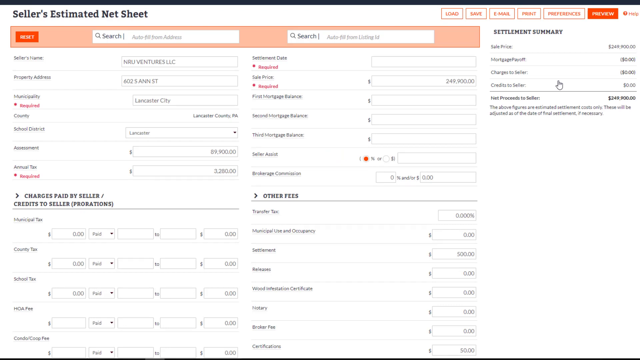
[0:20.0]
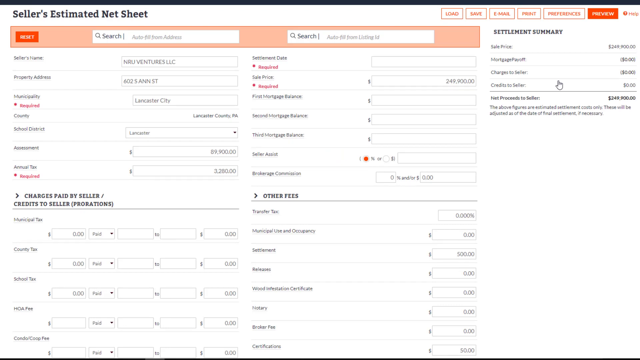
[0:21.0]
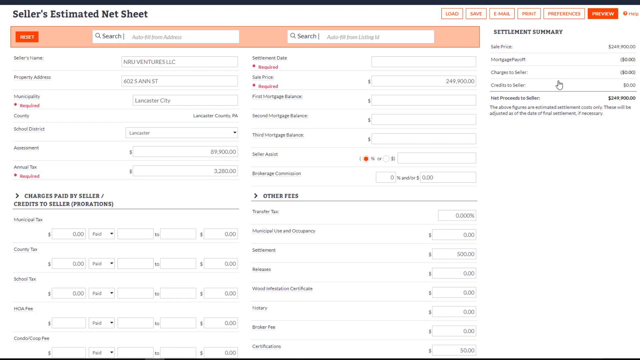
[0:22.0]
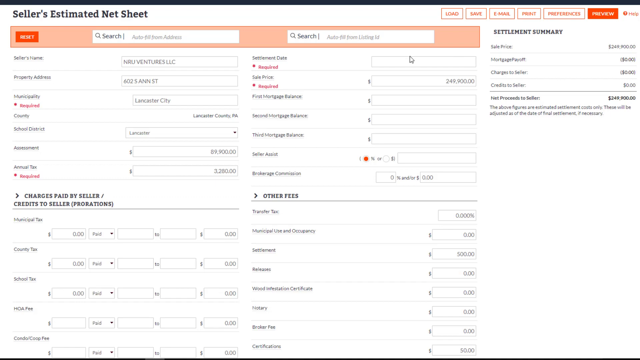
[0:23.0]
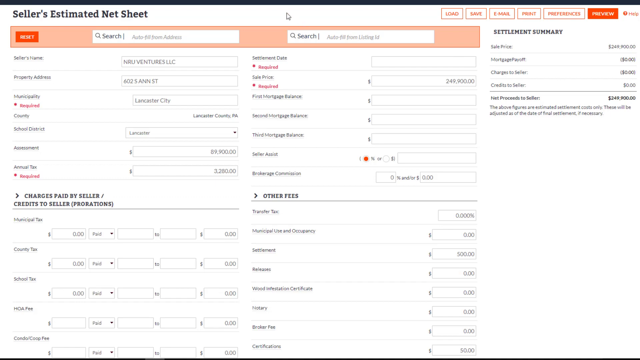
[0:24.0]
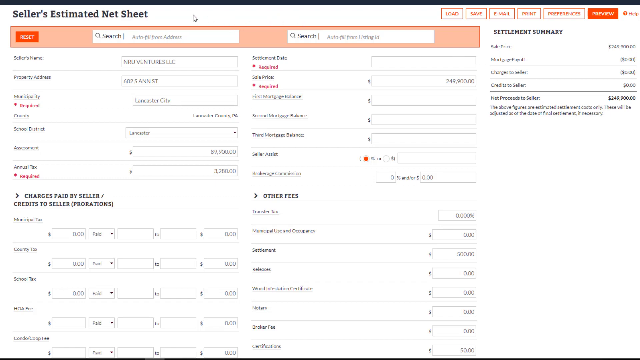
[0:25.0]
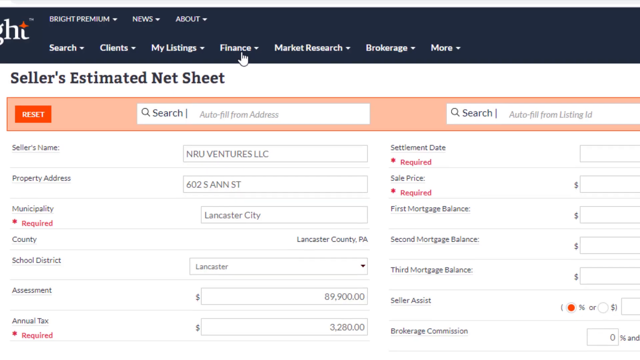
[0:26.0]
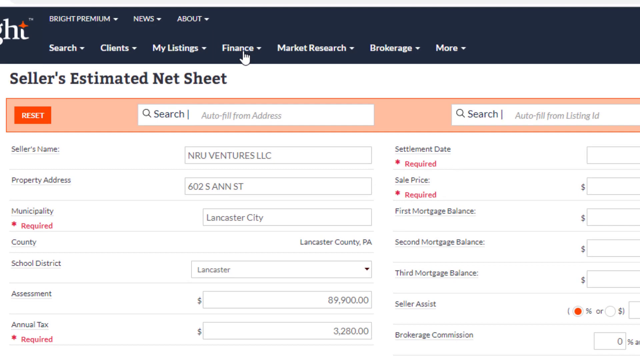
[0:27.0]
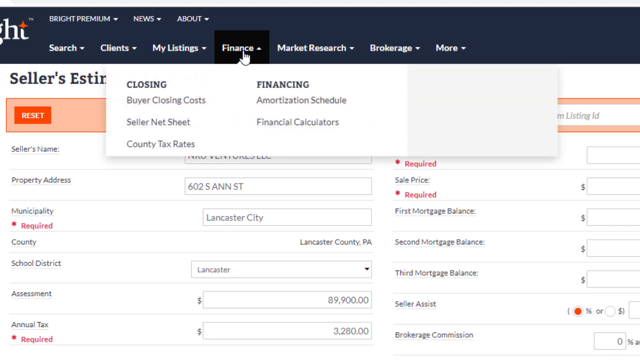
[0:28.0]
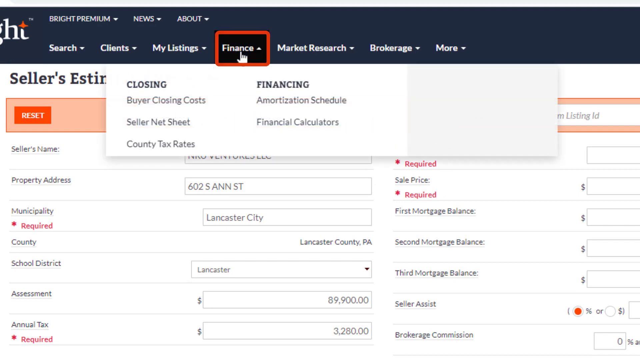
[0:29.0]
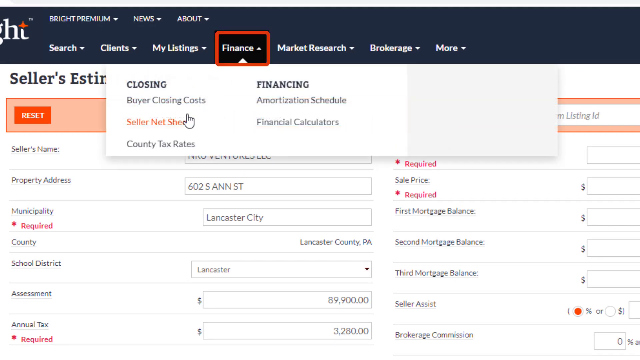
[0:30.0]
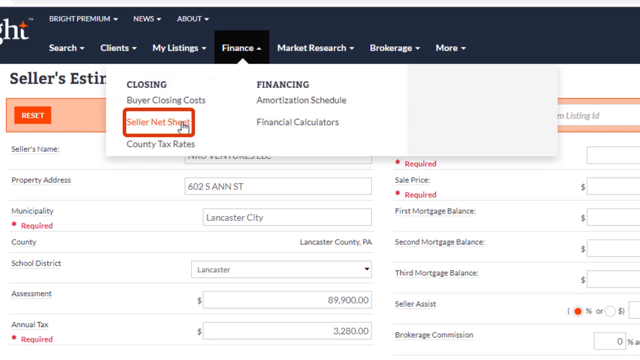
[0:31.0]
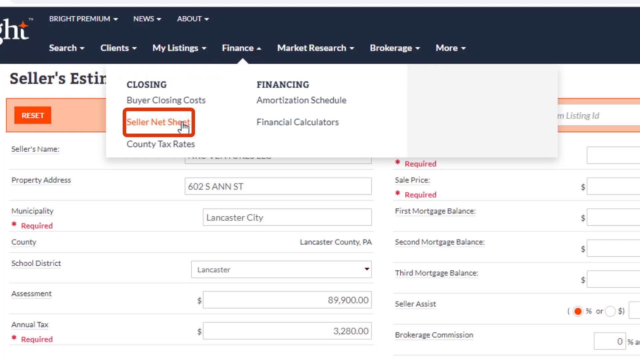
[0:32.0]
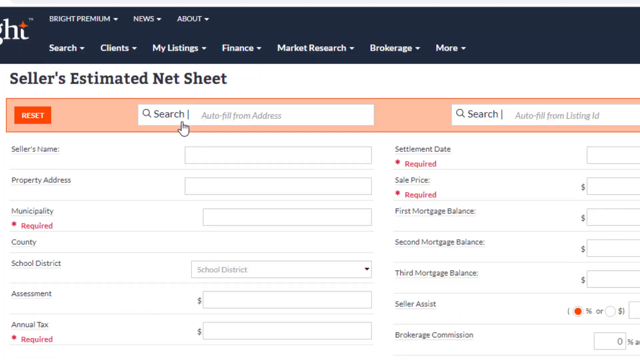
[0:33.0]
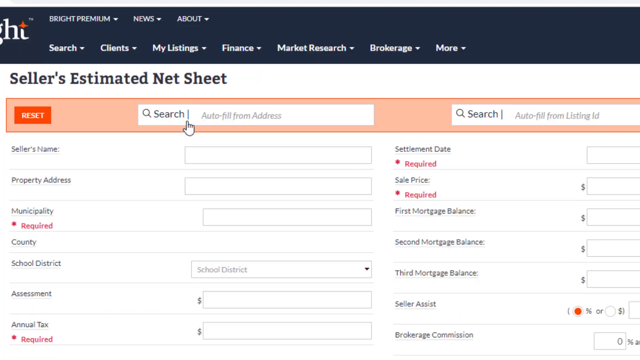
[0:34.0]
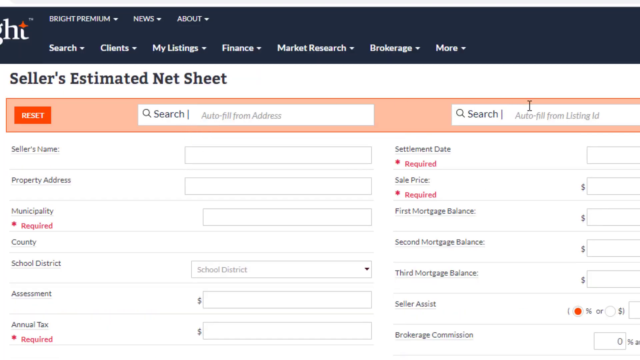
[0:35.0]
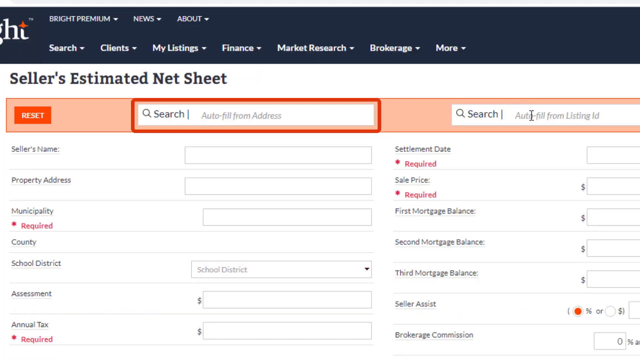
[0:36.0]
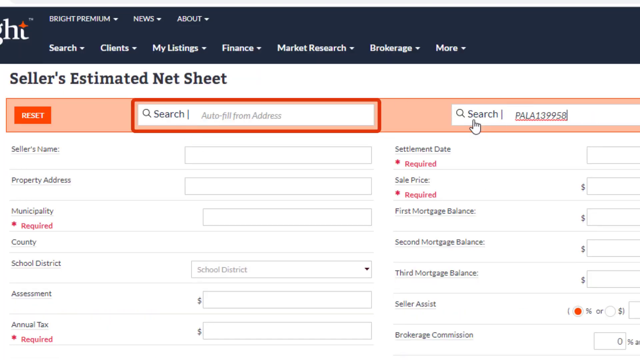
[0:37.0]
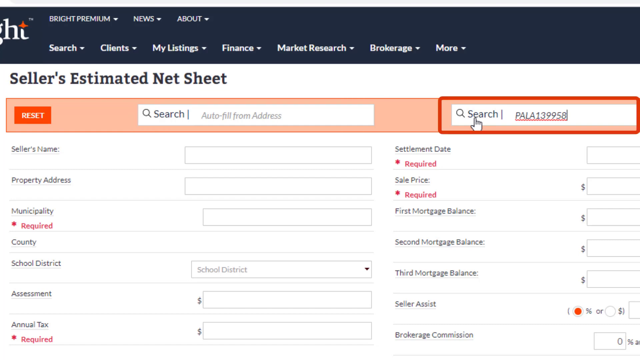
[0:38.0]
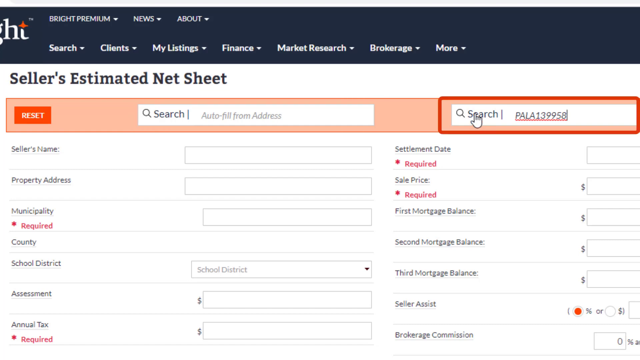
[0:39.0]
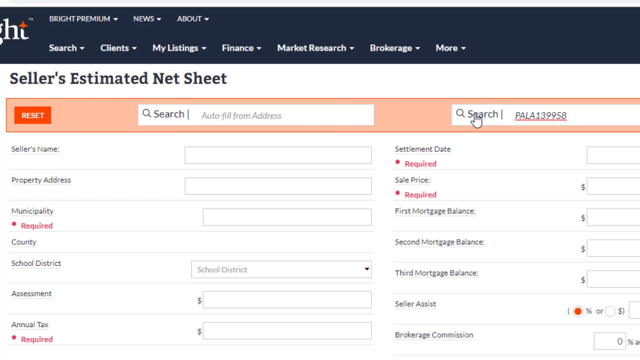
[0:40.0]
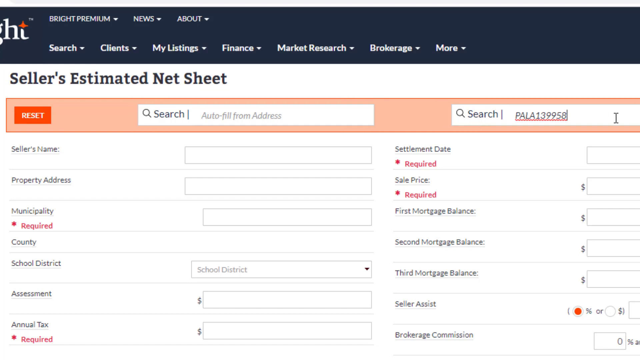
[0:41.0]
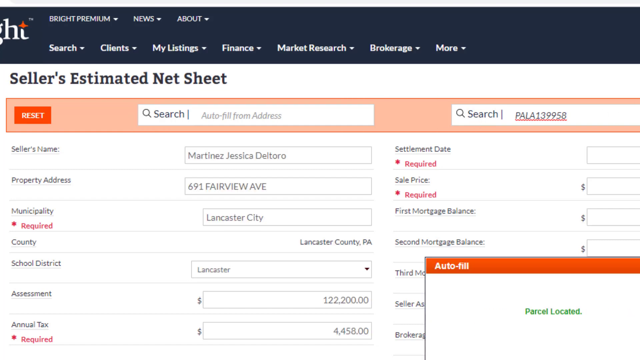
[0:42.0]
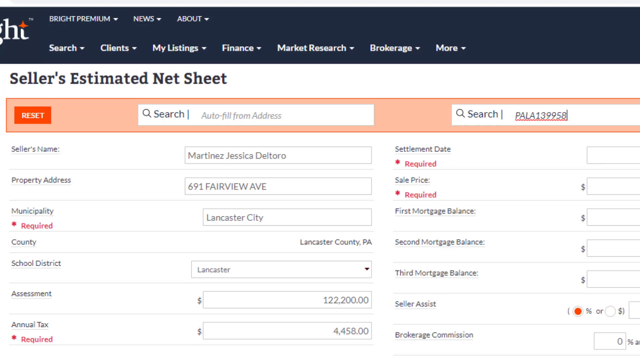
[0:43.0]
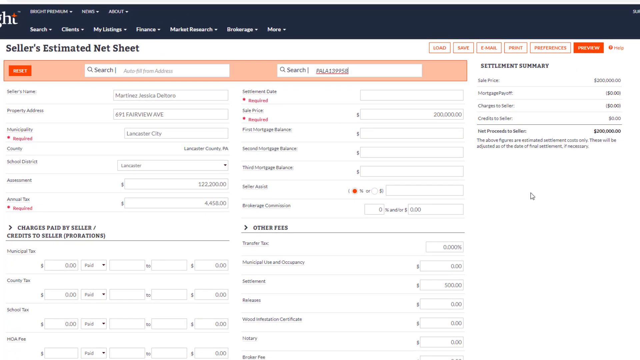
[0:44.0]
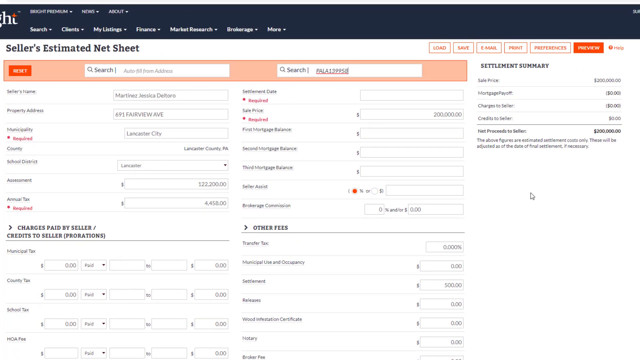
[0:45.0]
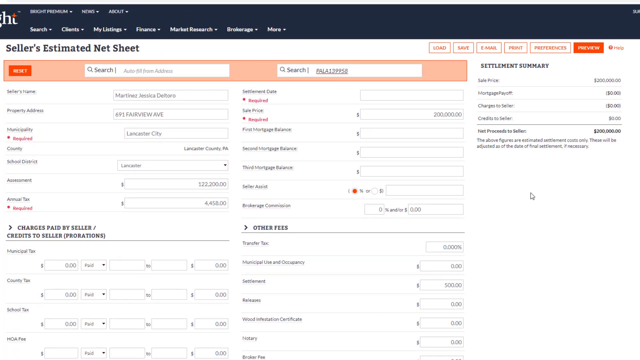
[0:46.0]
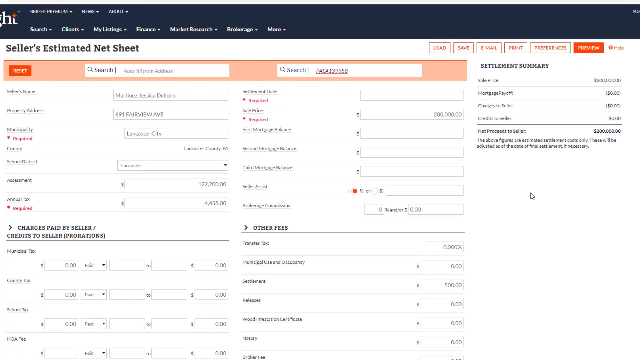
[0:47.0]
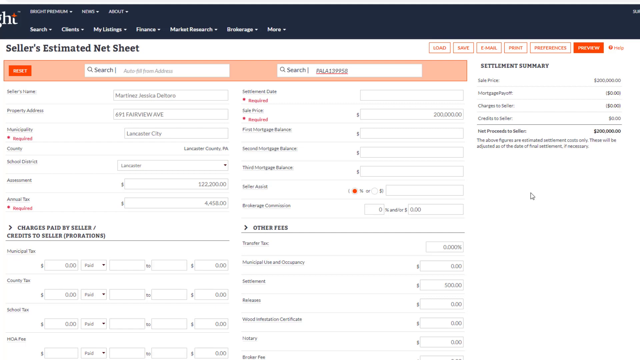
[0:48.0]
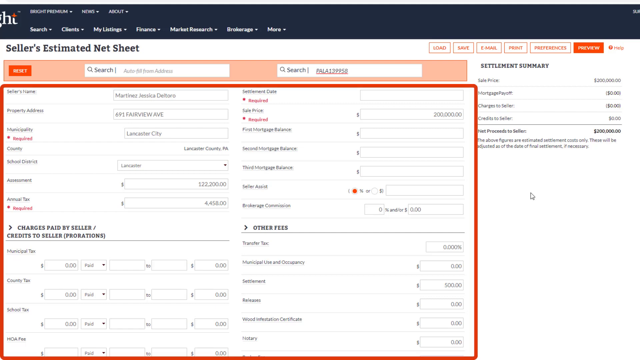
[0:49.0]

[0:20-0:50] An online document called "Seller's Estimated Net Sheet" is on screen, its buttons and emphasized text done in orange. The page has lots of entry spots for different types of information and five major sections. The view zooms in on the top of the sheet, where there are options and drop-down menus labeled "search," "clients," "my listings," "finance," "market research," "brokerage," and "more." The mouse hovers over the finances section, causing a screen with two columns to appear. The closing column lists "buyer closing costs," "seller net sheet," and "county tax rates"; the financing column reads "amortization schedule" and "financial calculators." The mouse clicks on Seller Netsheet, which returns to the same page. The user demonstrates conducting a property search using some kind of reference number, which auto-populates the form with lots of information. The view zooms out slightly to show the whole document, and a red rectangle briefly emphasizes the four main sections of the document. The view then zooms slightly back in on those four sections so that the drop-down menus at the top of the screen are no longer visible.